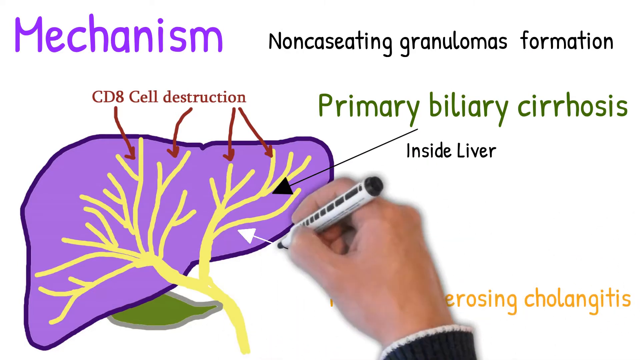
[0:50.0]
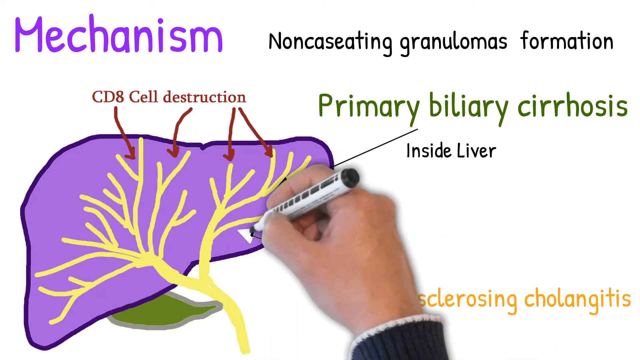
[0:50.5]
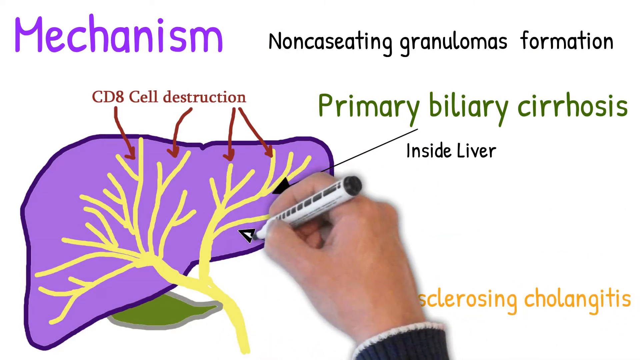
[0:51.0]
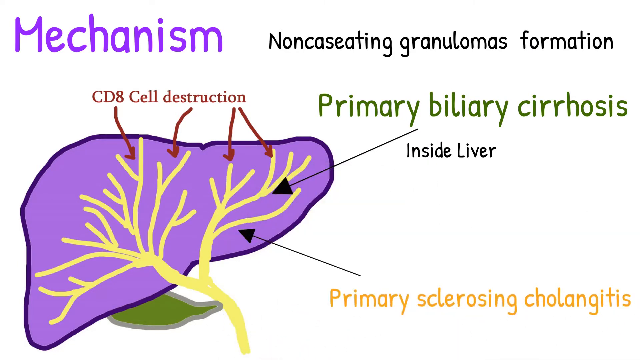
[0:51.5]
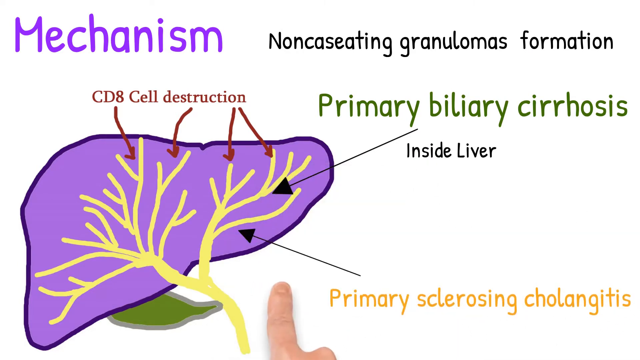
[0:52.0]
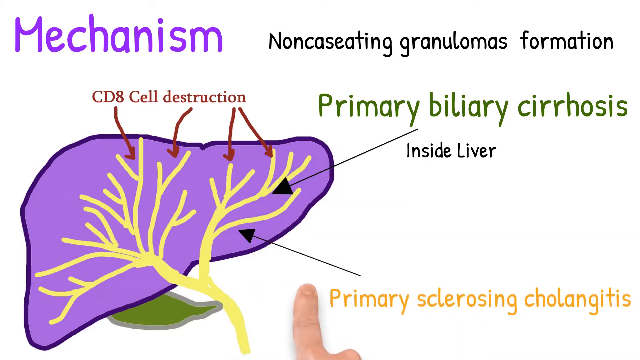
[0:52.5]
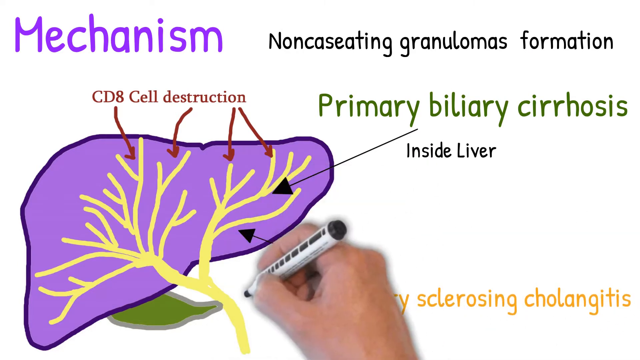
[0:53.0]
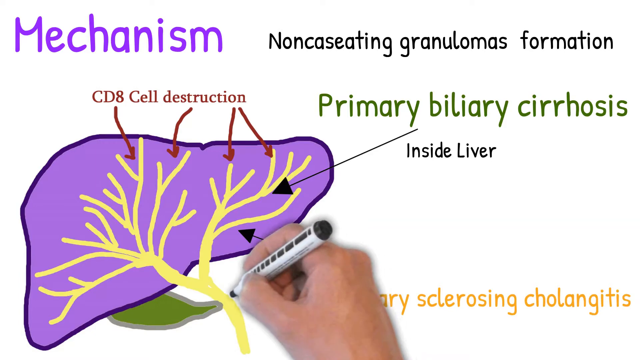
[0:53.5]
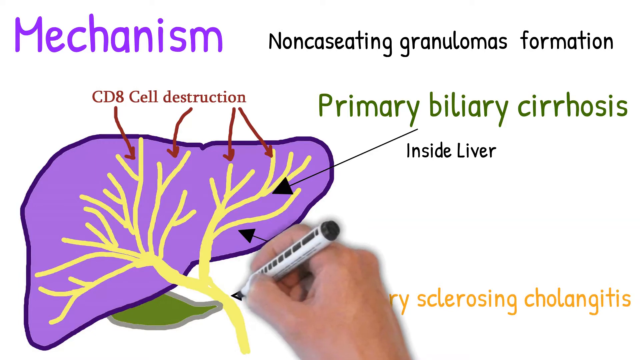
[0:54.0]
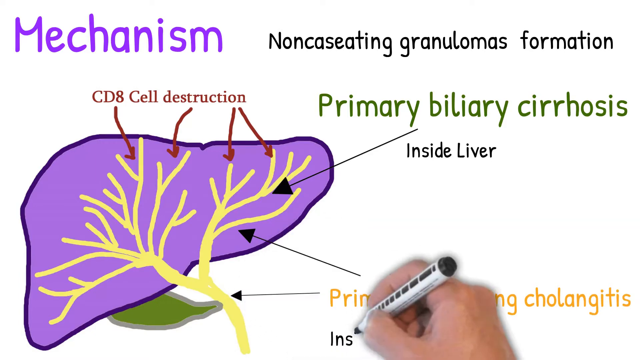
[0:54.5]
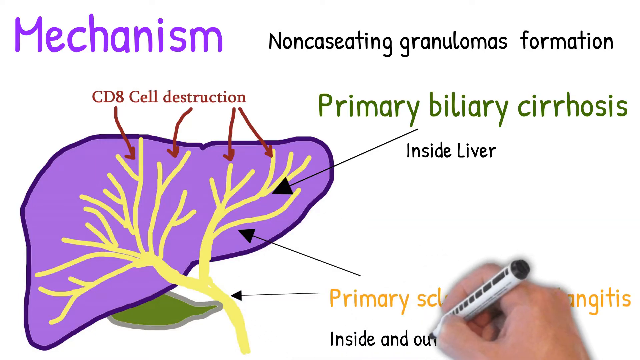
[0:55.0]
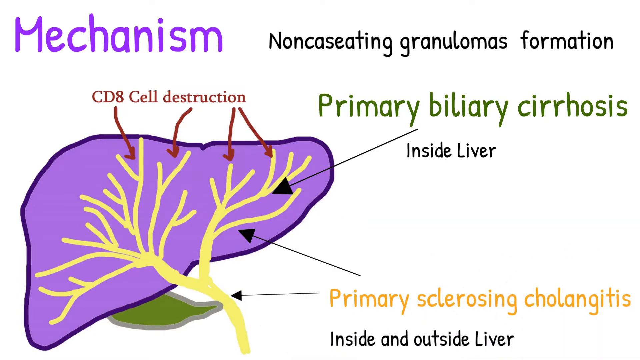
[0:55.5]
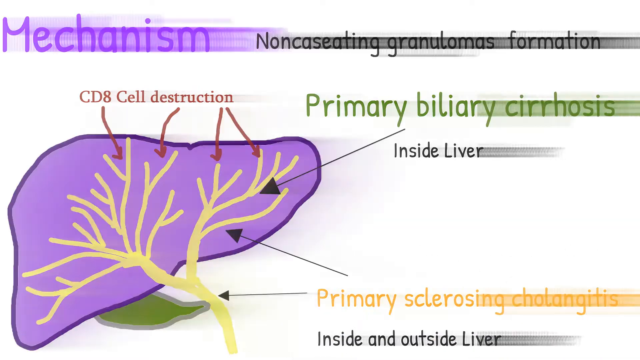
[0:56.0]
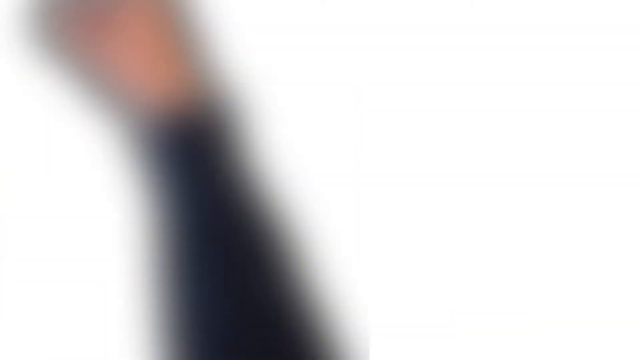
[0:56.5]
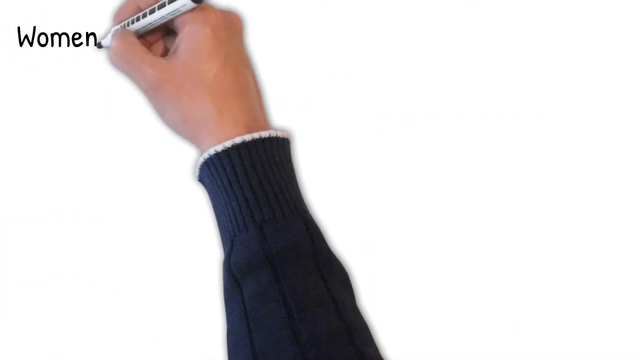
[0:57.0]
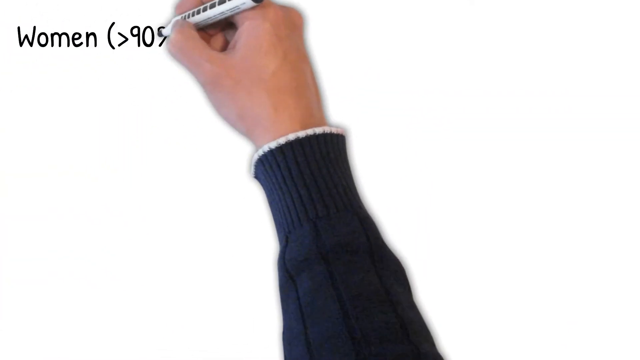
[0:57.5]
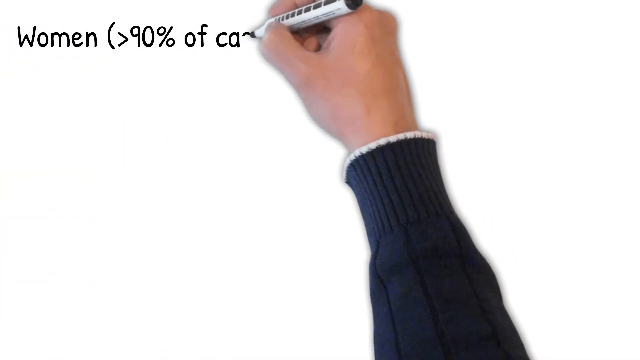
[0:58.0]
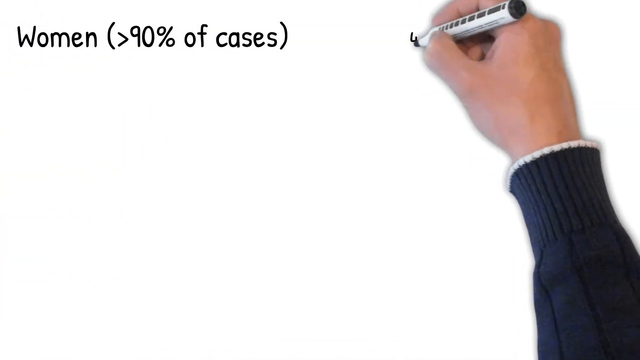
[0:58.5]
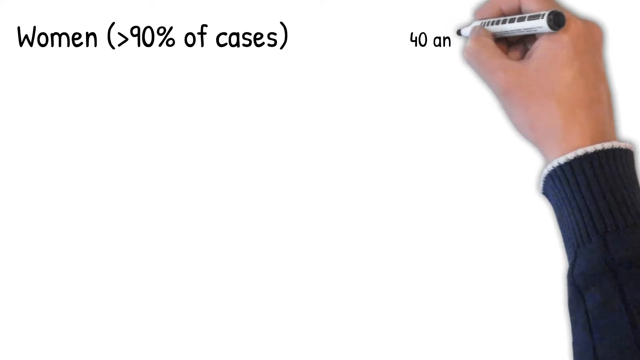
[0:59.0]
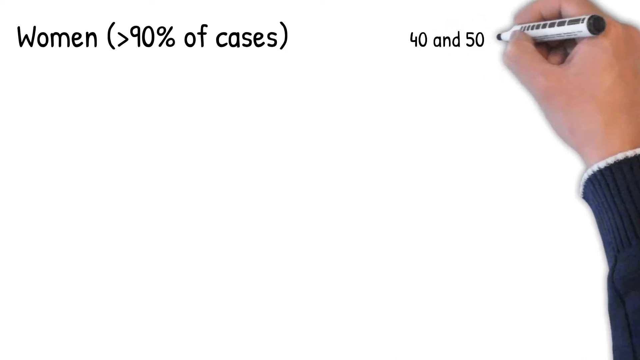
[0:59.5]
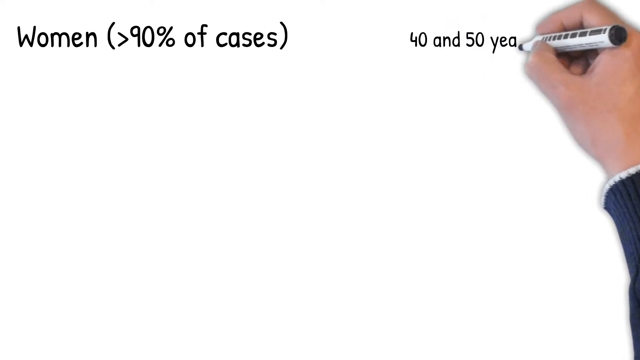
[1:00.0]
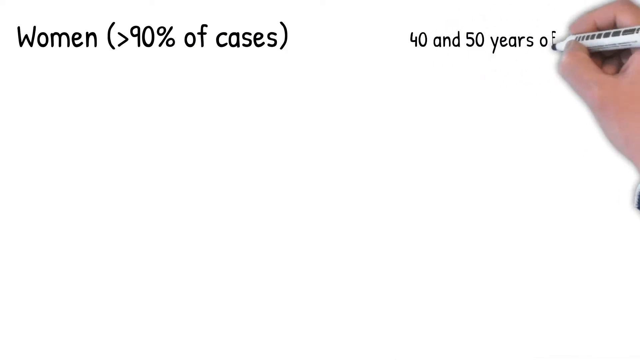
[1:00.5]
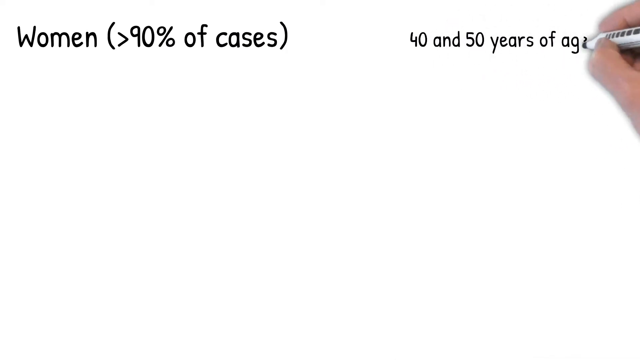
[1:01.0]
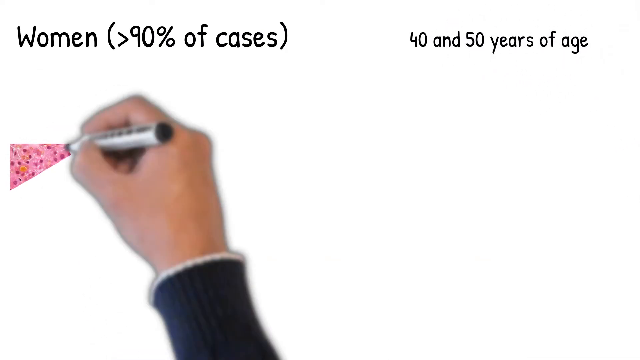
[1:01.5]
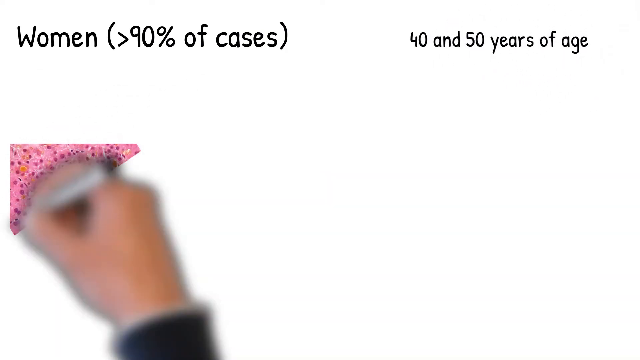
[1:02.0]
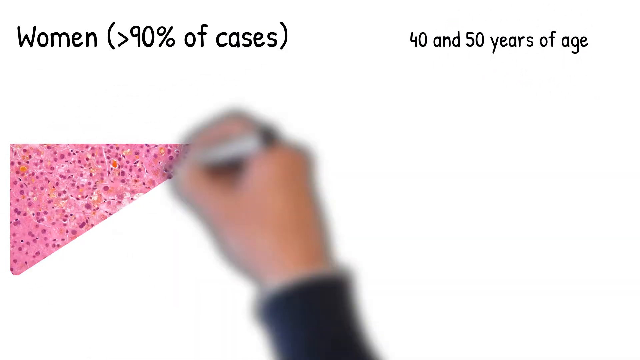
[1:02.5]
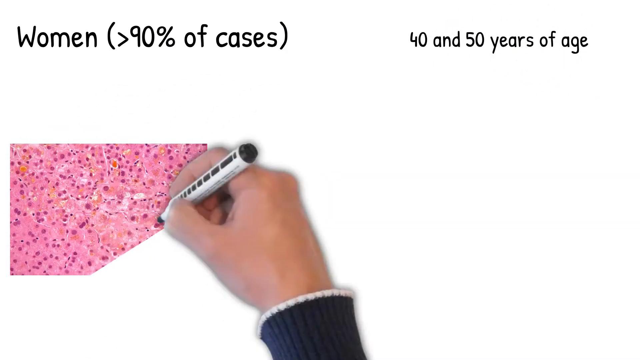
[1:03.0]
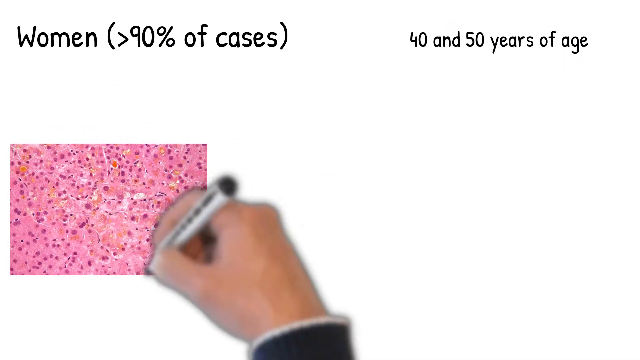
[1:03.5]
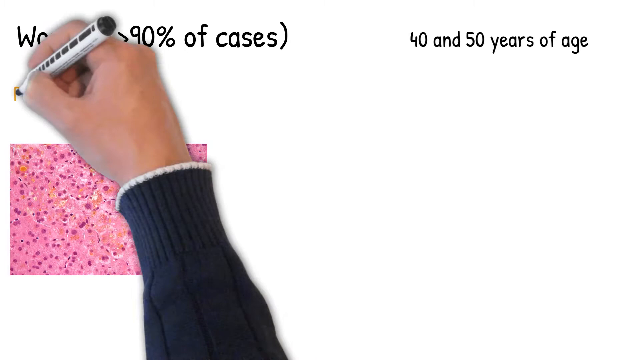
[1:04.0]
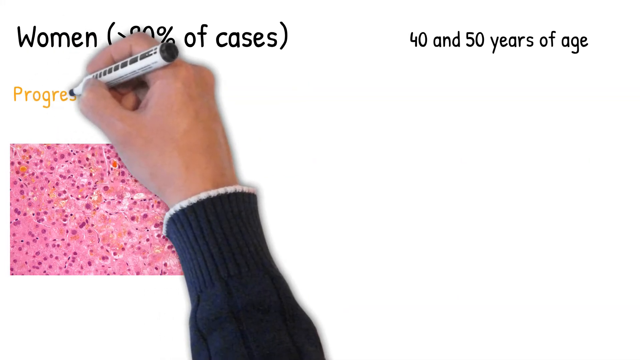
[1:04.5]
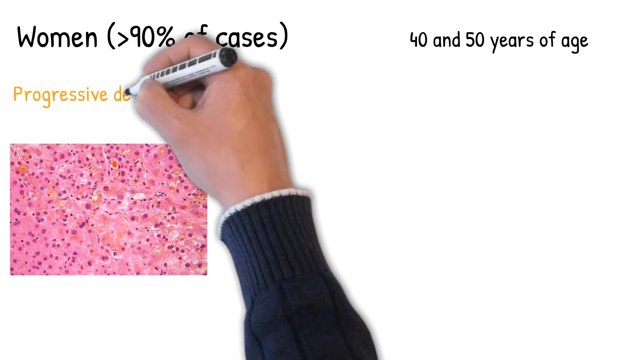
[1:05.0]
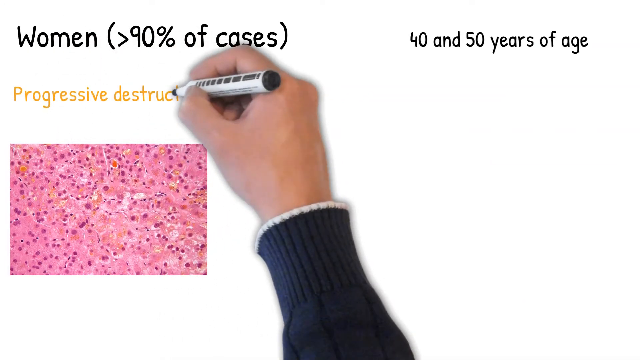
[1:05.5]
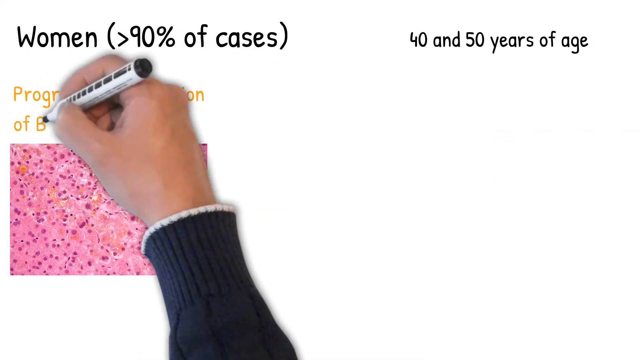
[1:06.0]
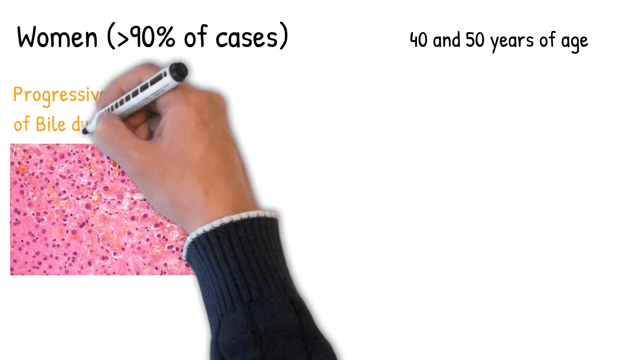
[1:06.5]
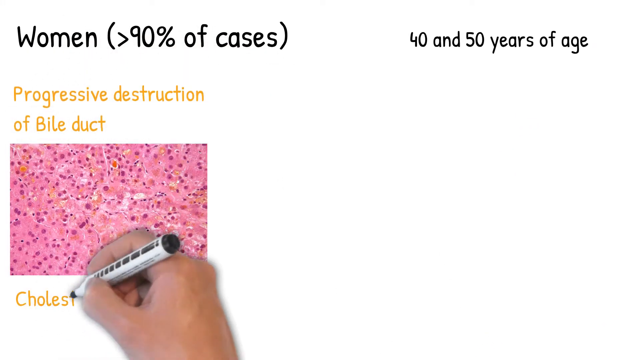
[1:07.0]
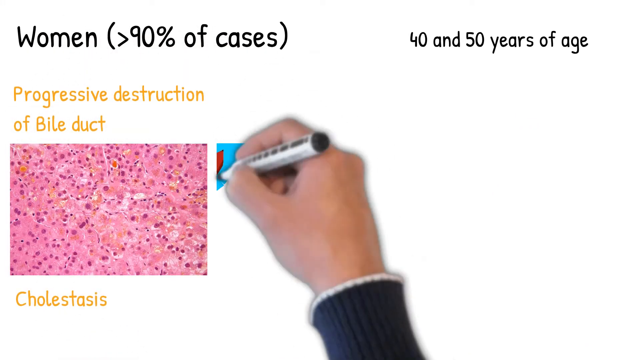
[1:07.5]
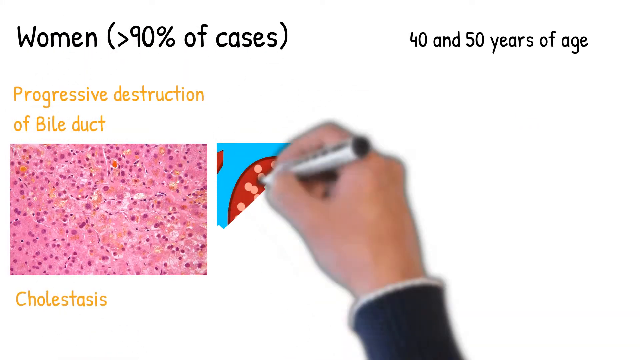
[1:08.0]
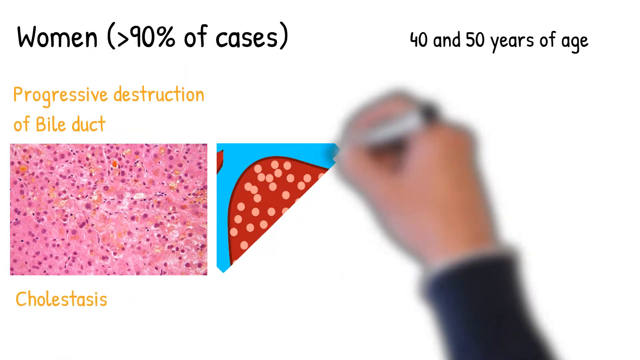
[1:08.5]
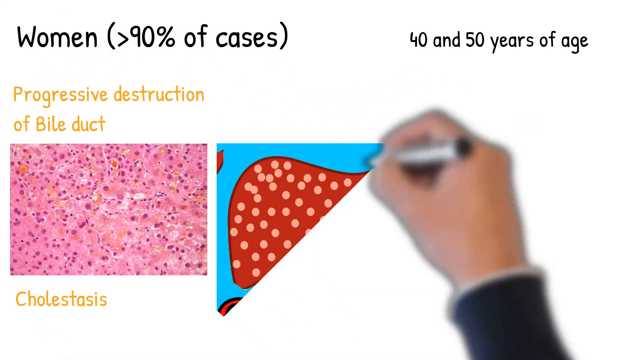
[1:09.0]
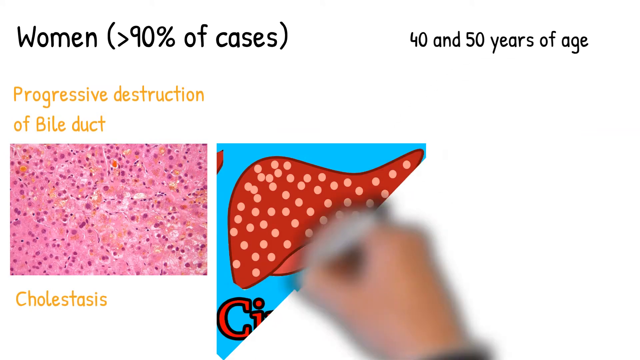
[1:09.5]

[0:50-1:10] A Caucasian male's right hand holds a white marker with black writing and a black end, drawing on a whiteboard. In the upper left corner, purple text reads "Mechanism". Beneath it, red text reads "CD8 cell destruction", followed by four red vertical arrows pointing down into a drawing of a purple liver with yellow veining drawn over it. Below, the hand draws a pink tissue sample with purple dotting, and above it writes in mustard yellow "progressive destruction of bile duct cholestasis". To the right, it draws a red, spotted liver on a blue background with "cirrhosis" written underneath. At the bottom of the image, orange text reads "sclerosing cholangitis"; above that, at center right, black text reads "inside liver"; above that, toward the top right, "primary biliary cirrhosis"; and at the very top right, in black, "non-caseating granulomas formation". Arrows are drawn to the liver from the top right quadrant, the lower right quadrant, and the very bottom right quadrant.